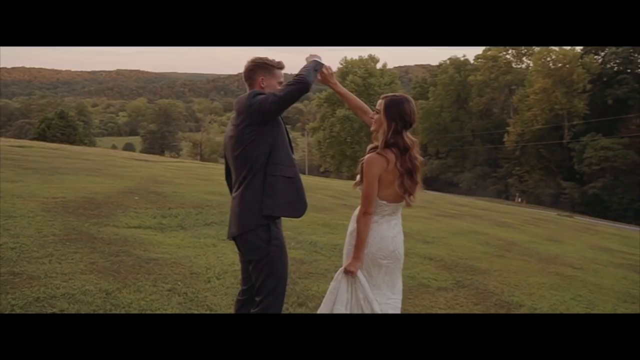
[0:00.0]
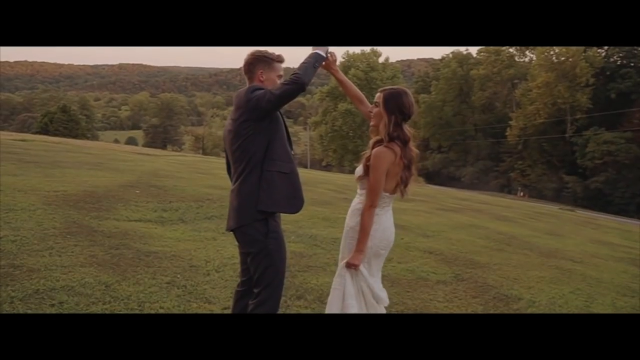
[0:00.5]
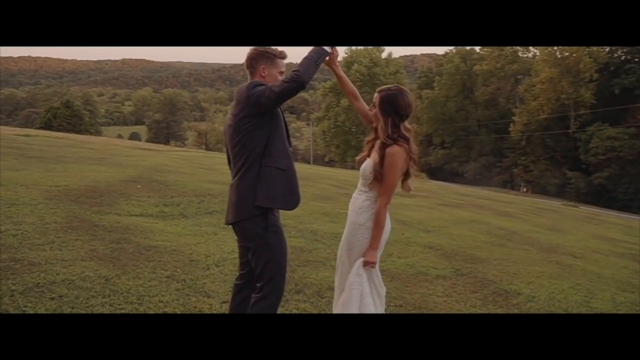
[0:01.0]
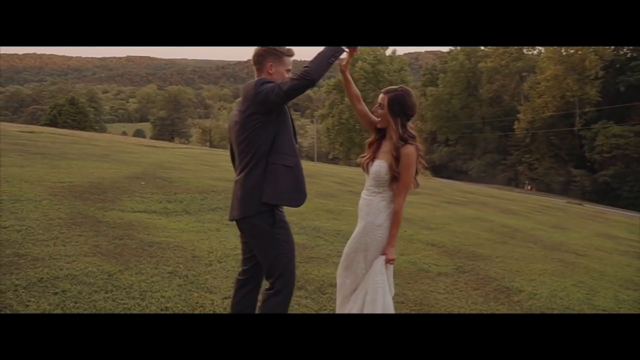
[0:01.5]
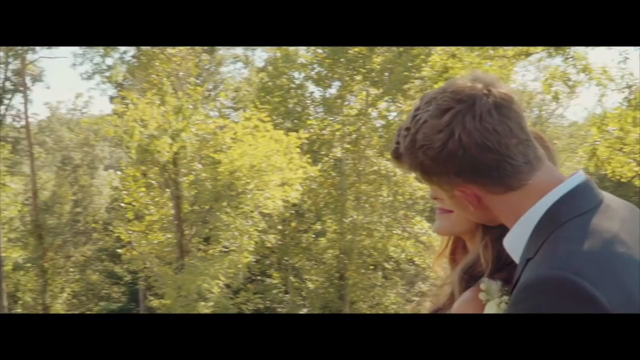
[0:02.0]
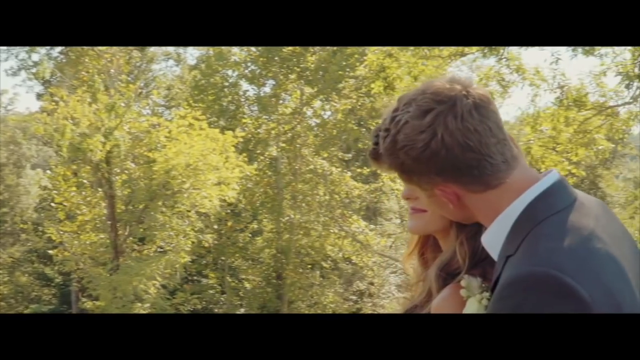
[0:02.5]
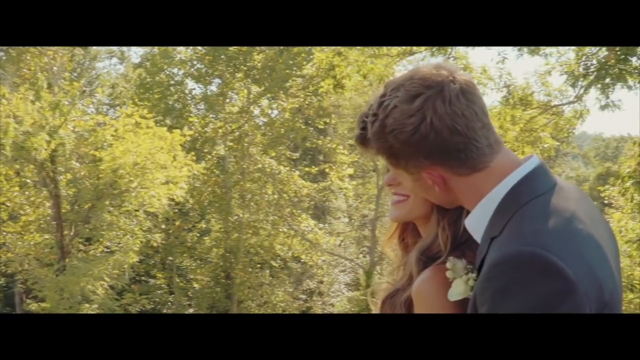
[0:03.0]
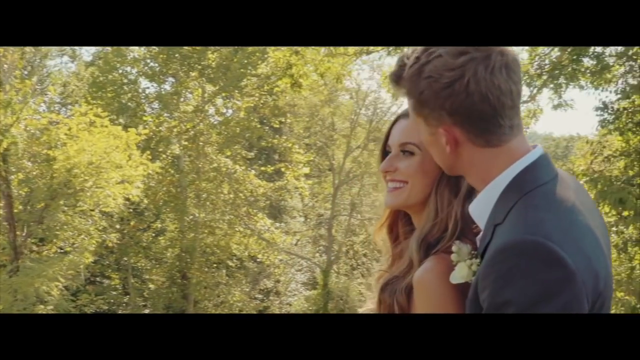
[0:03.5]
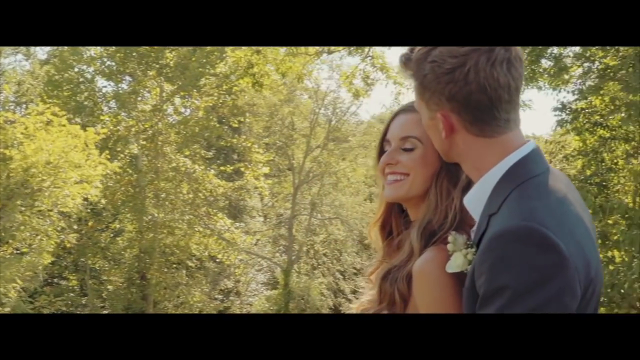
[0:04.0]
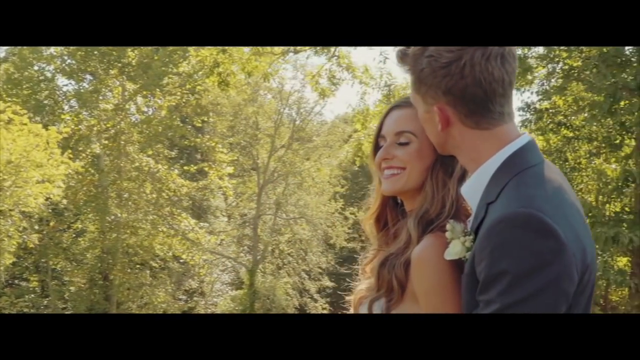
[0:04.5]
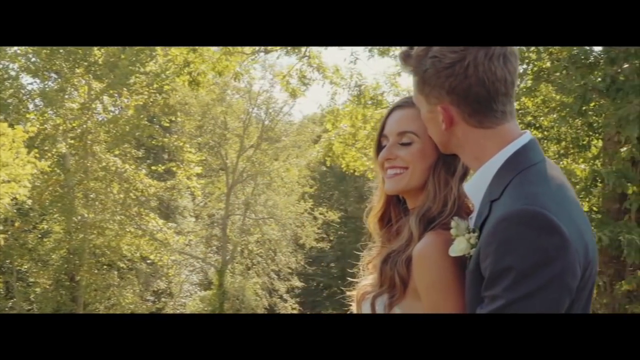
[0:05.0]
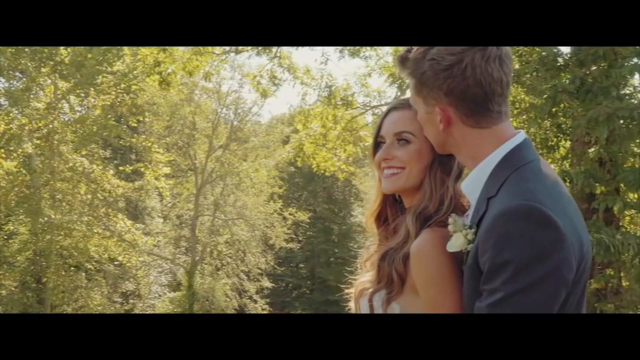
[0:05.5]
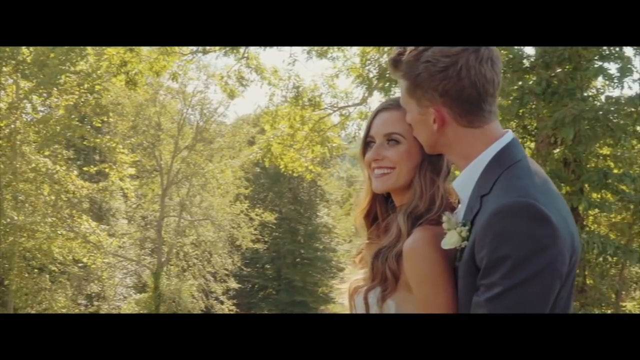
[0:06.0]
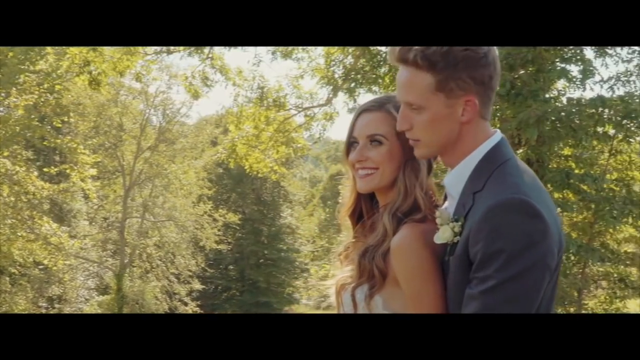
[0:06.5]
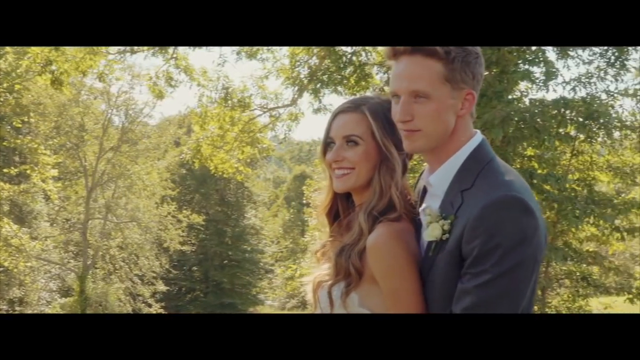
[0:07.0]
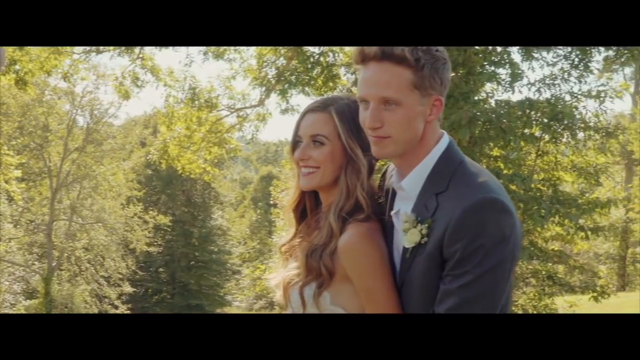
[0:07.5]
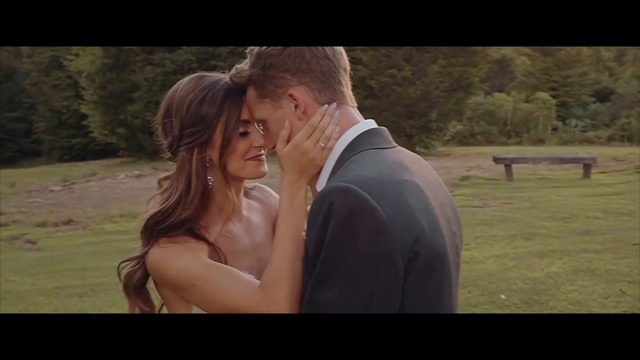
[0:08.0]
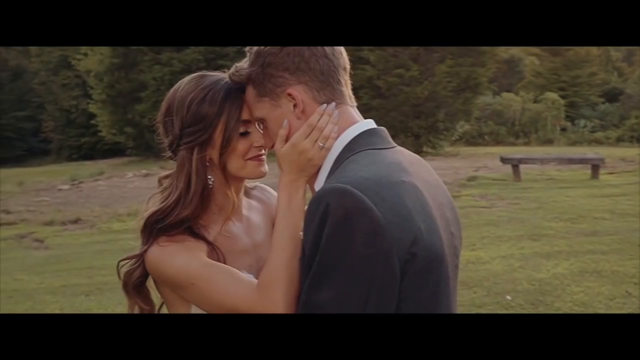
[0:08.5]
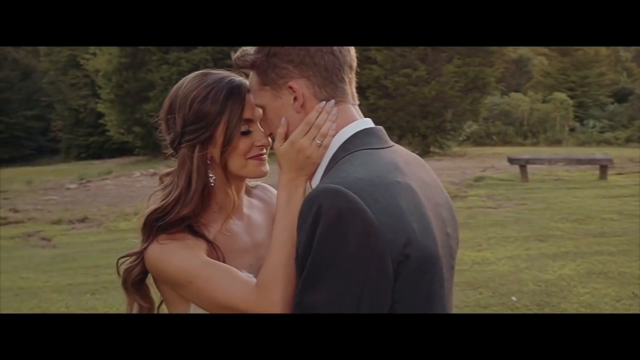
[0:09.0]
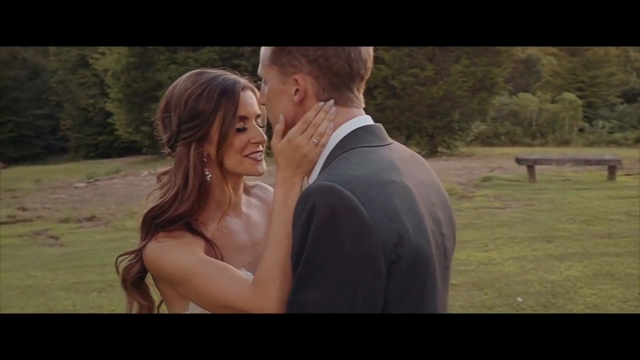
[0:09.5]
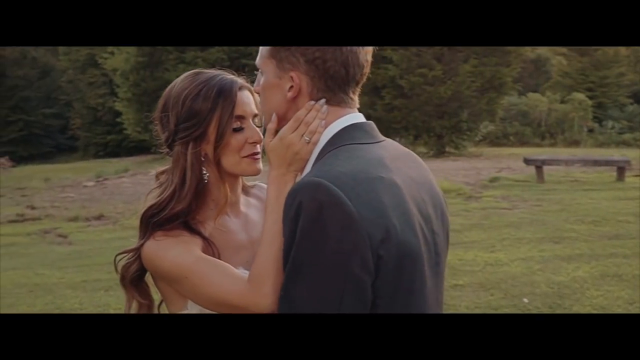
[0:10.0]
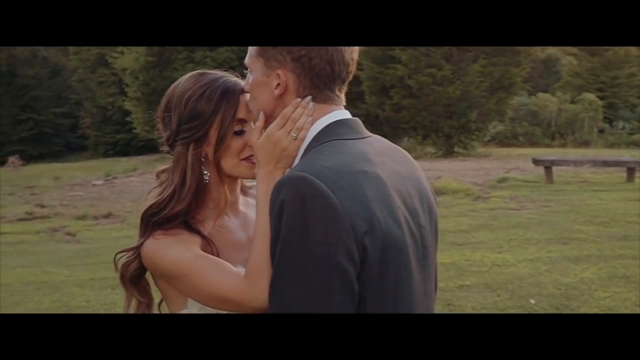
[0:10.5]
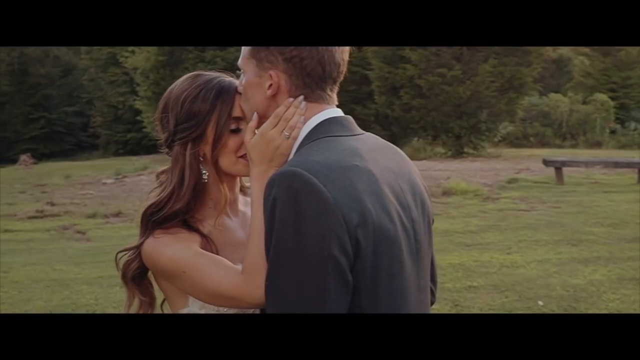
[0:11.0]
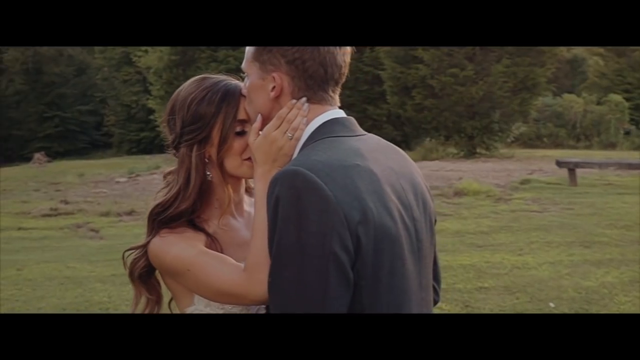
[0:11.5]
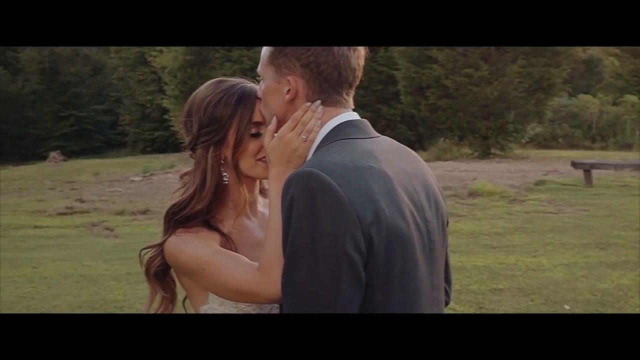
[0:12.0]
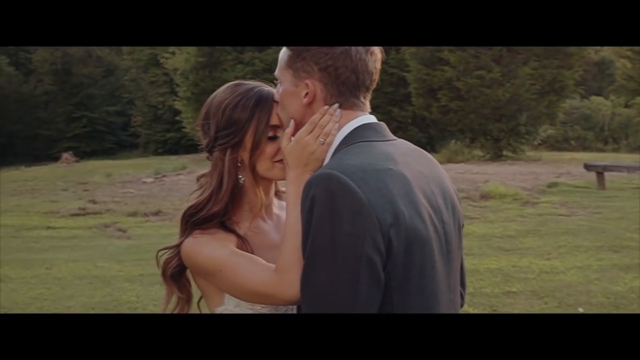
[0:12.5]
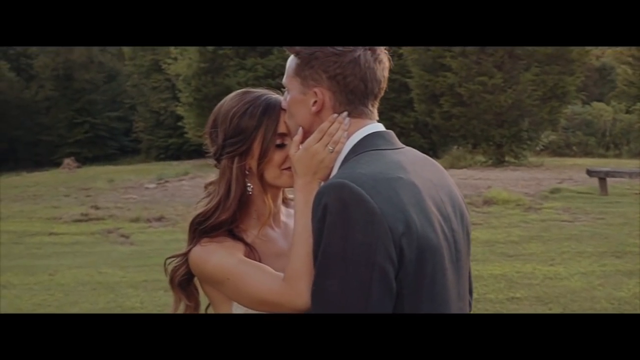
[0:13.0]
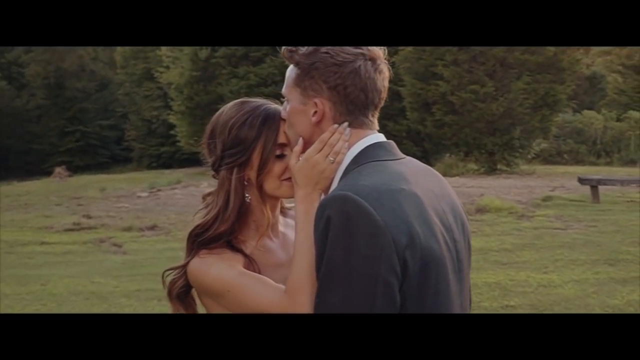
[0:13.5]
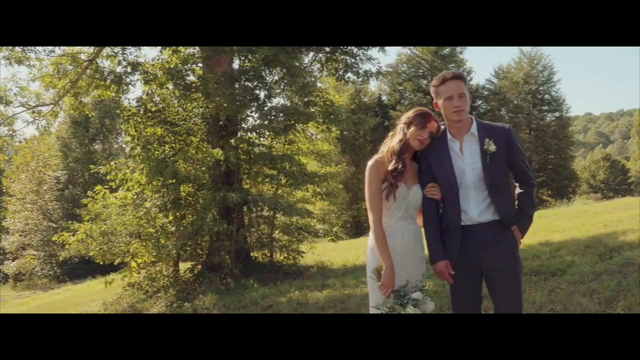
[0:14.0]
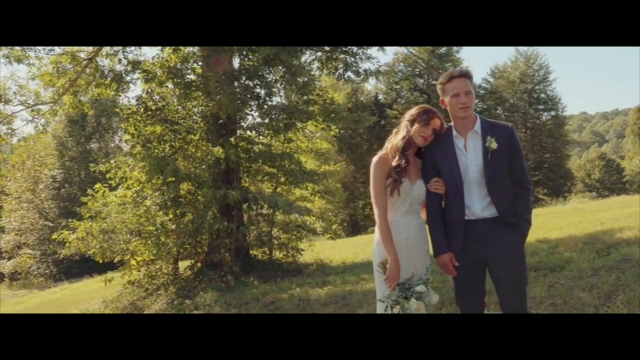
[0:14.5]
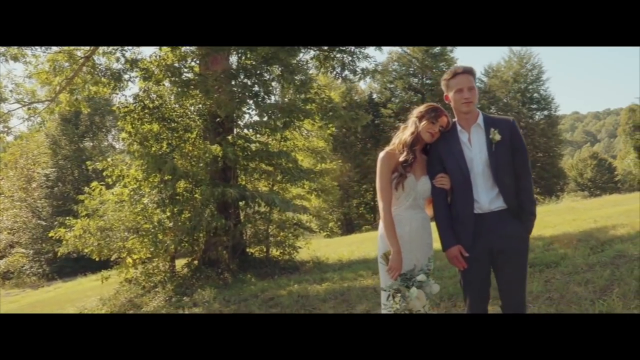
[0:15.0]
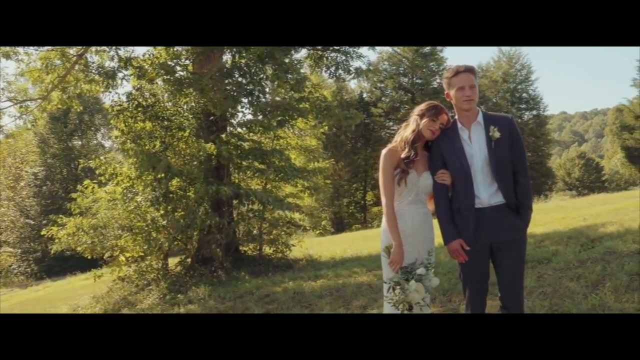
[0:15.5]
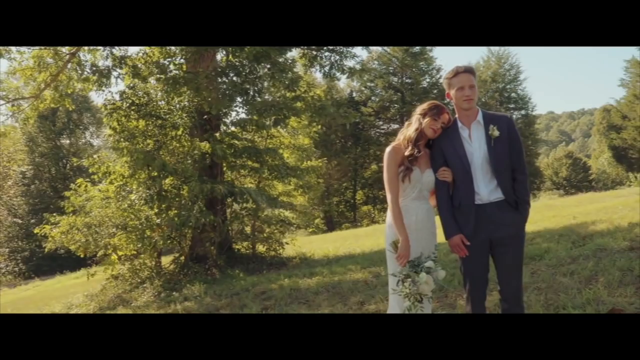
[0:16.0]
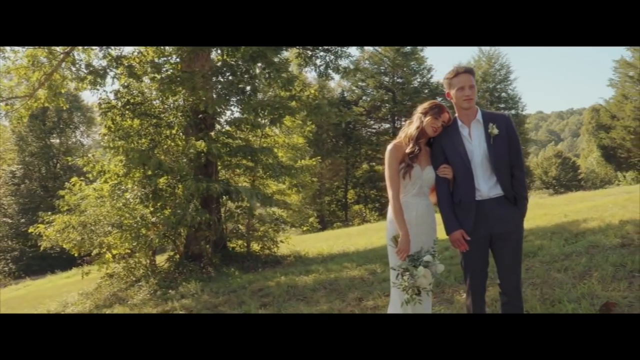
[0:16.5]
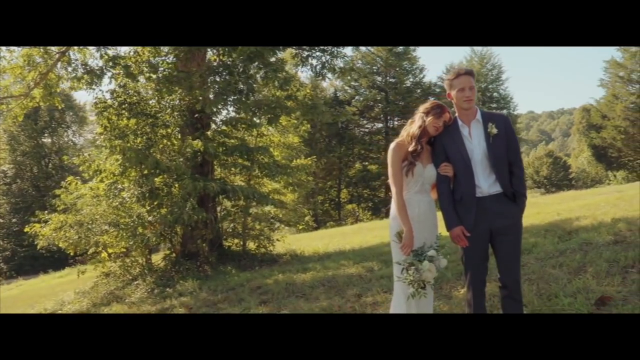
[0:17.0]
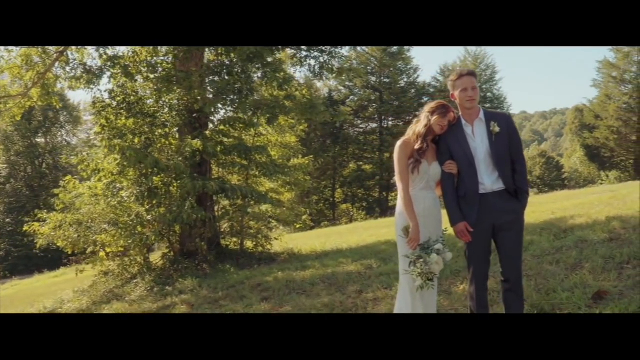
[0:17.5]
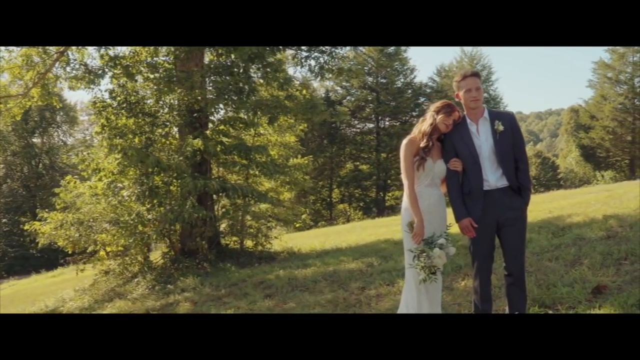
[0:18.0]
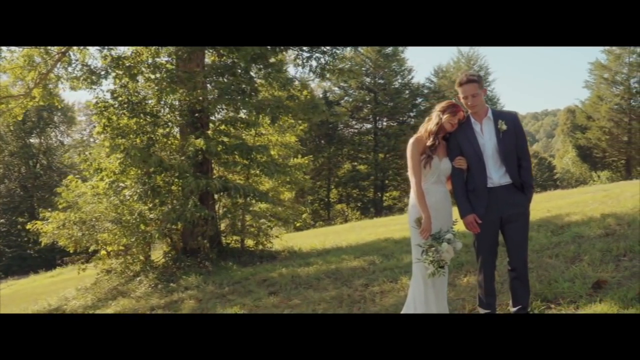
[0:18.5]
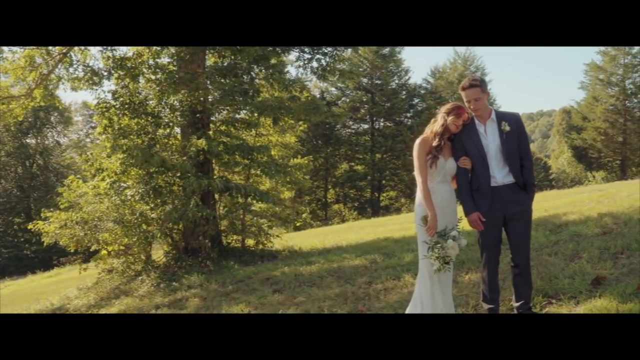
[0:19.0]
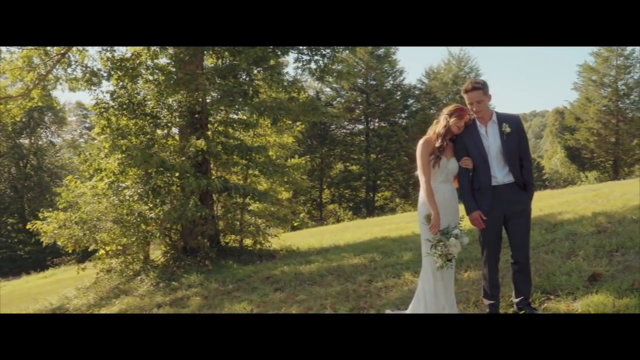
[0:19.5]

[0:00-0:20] Footage shows a newly wedded couple standing in a huge open space on a big lawn, with what looks like a forest in the background. They hold hands, and in one shot they stand together with the woman in front of the man. The man wears a black suit. The woman smiles as he kisses the left side of her face, and then her left hand is shown as they look forward. In another shot she holds him across his neck as he kisses her forehead. In a further shot the woman holds the man, rubbing her arm around him and laying her head on his shoulder while holding flowers.